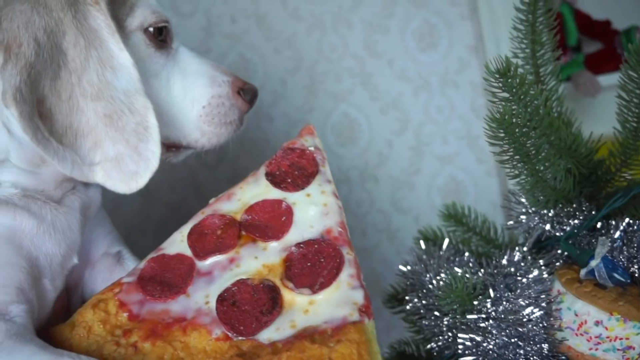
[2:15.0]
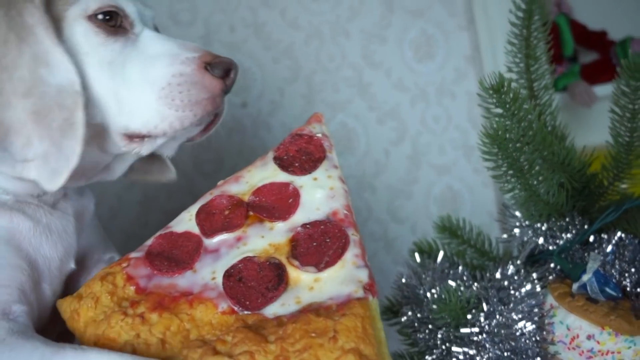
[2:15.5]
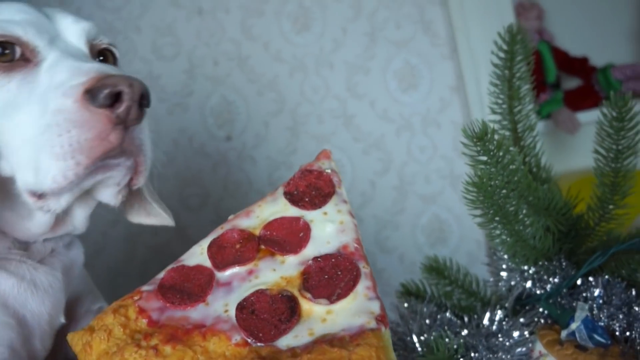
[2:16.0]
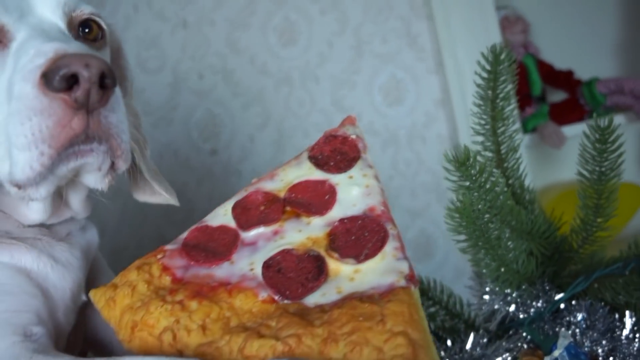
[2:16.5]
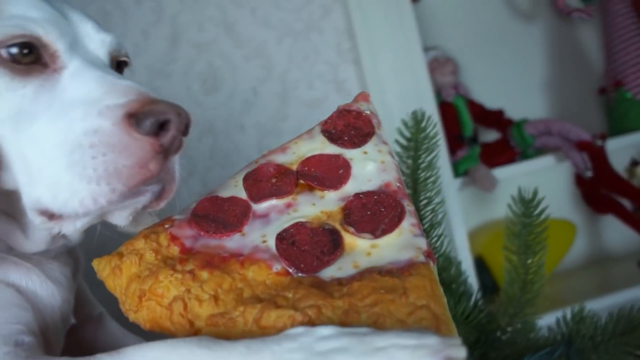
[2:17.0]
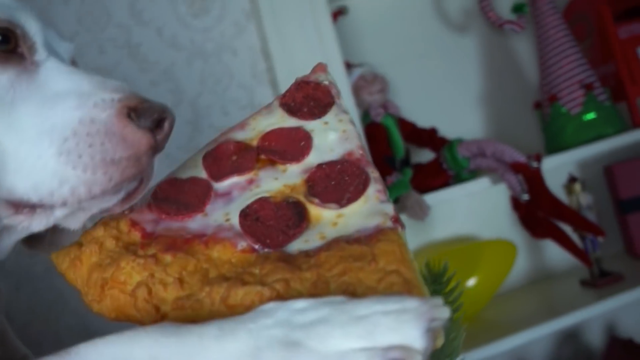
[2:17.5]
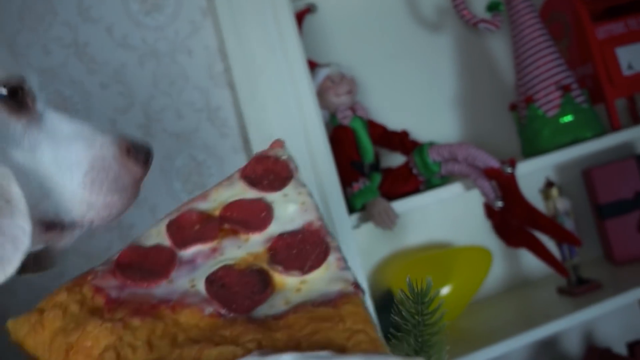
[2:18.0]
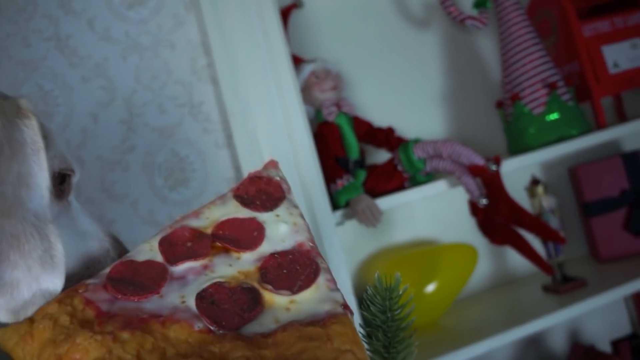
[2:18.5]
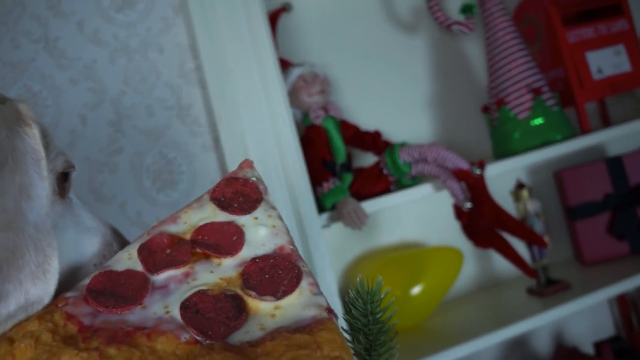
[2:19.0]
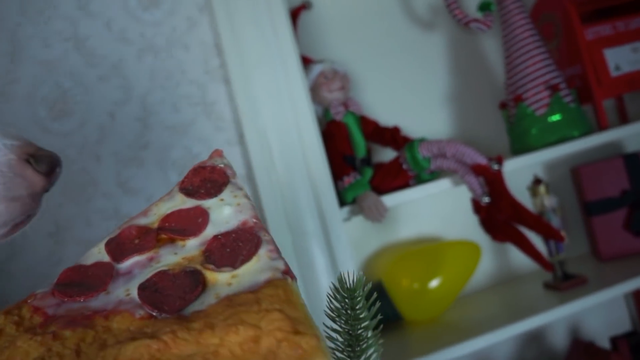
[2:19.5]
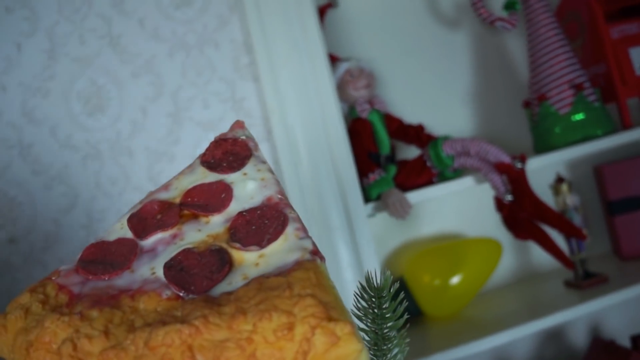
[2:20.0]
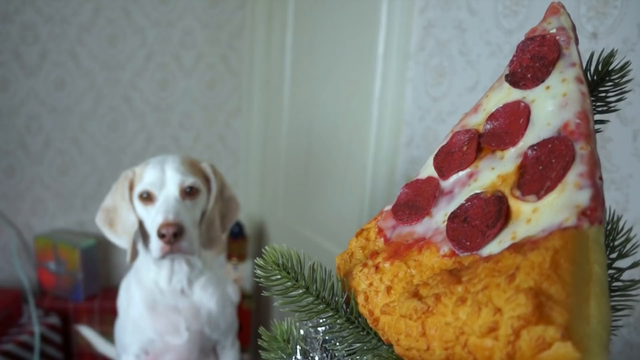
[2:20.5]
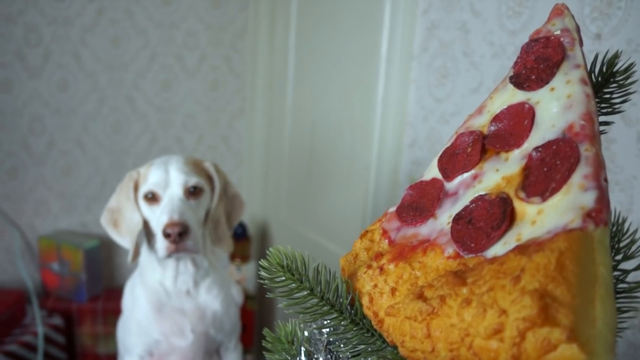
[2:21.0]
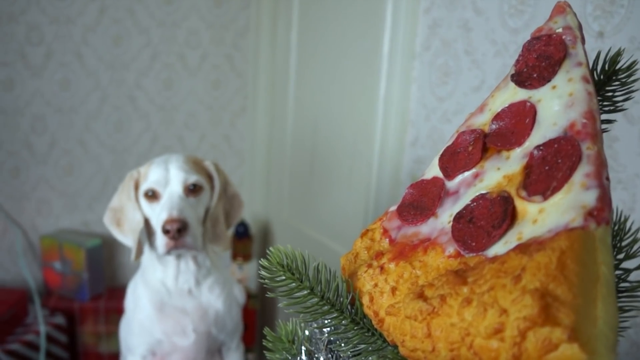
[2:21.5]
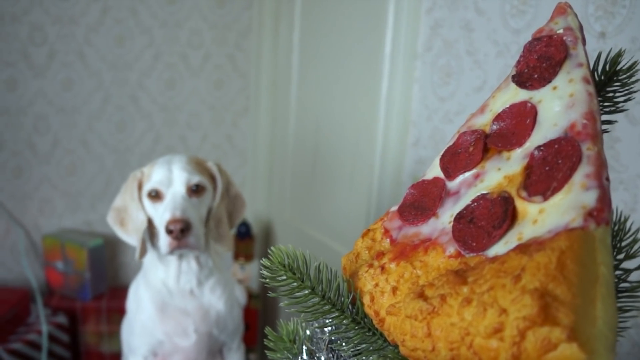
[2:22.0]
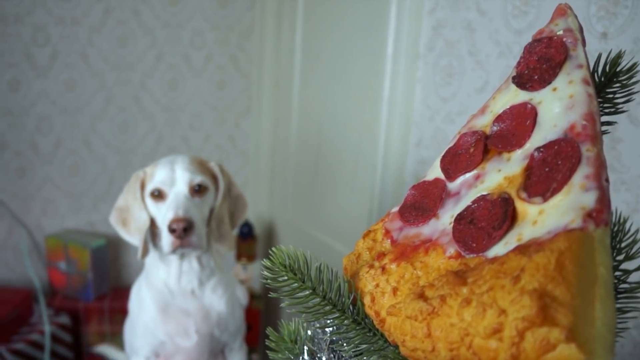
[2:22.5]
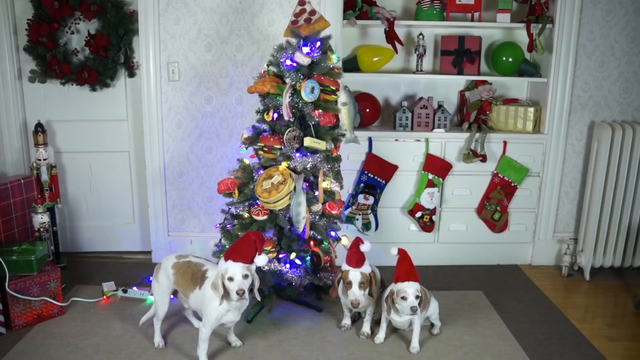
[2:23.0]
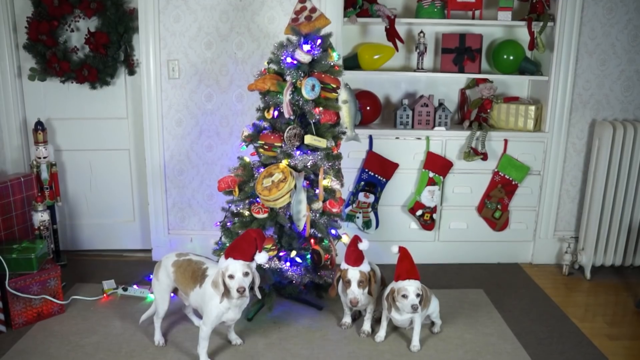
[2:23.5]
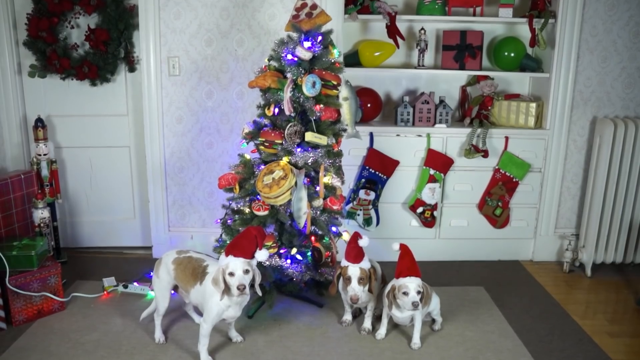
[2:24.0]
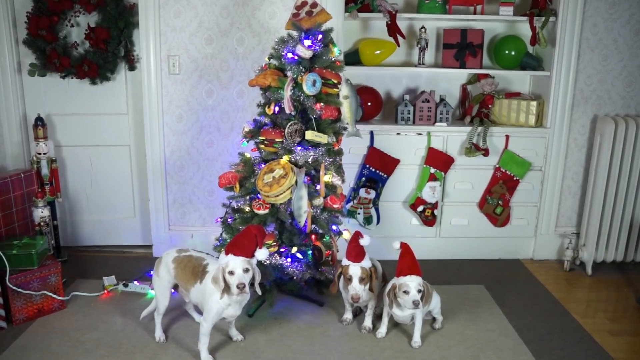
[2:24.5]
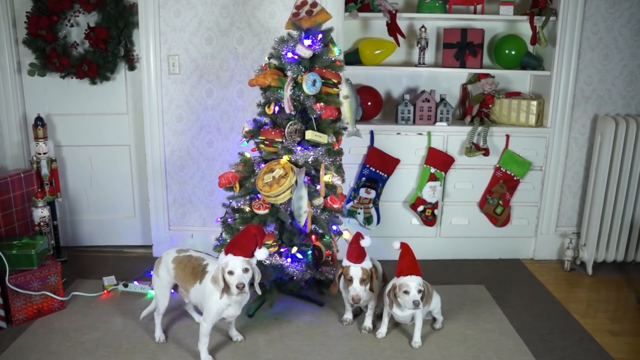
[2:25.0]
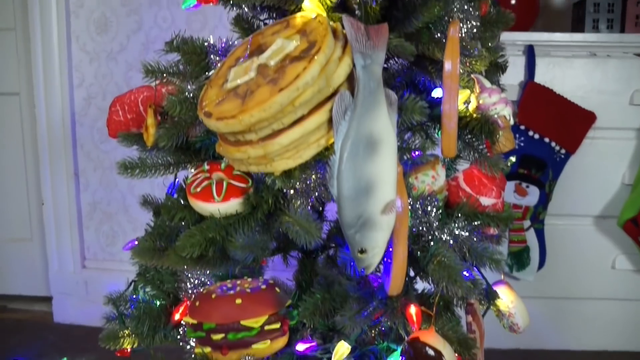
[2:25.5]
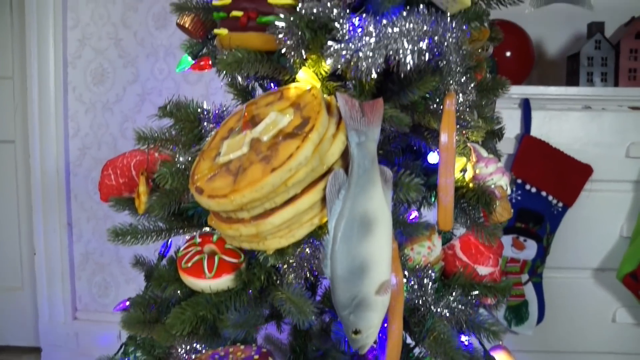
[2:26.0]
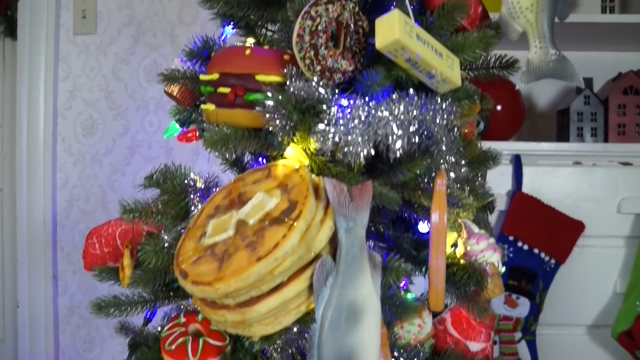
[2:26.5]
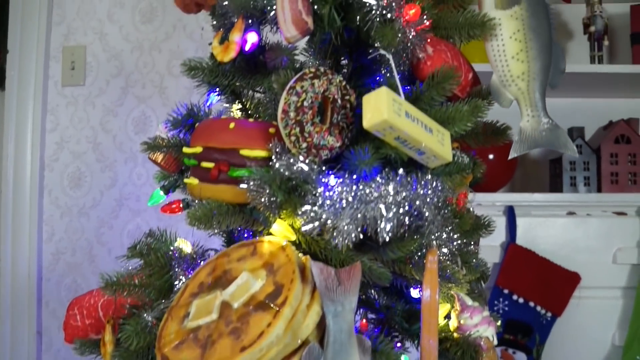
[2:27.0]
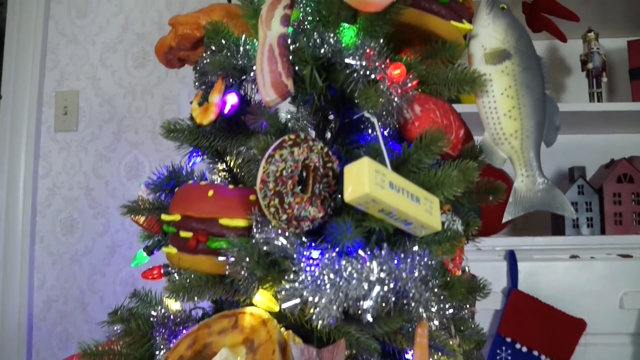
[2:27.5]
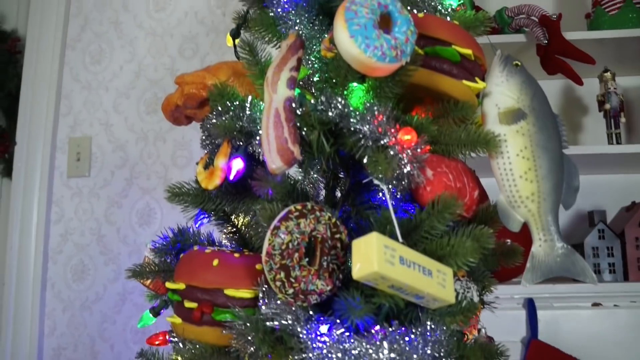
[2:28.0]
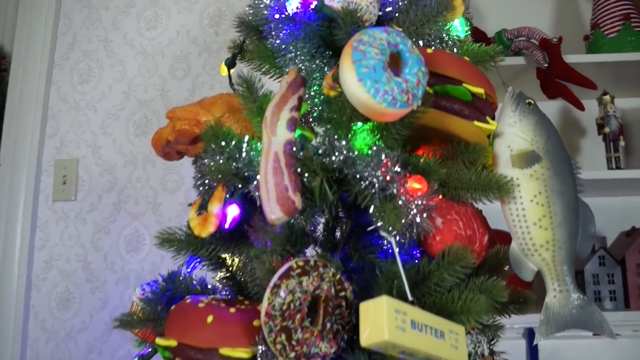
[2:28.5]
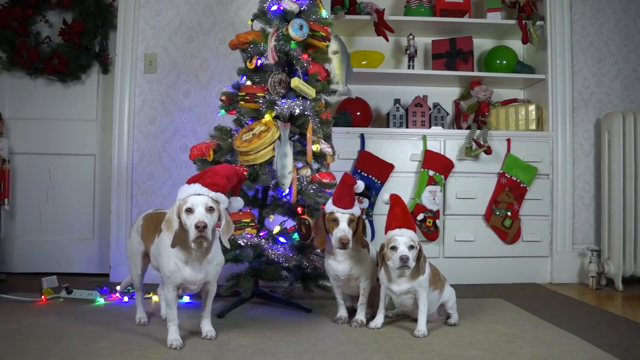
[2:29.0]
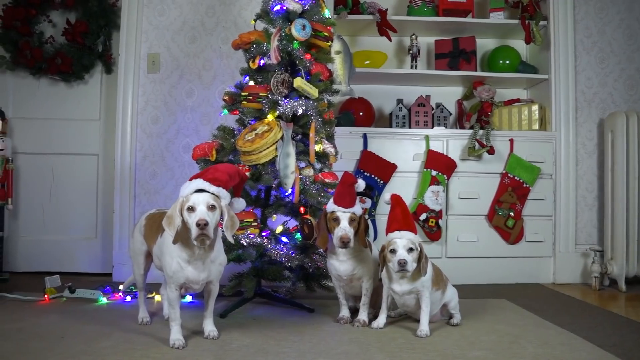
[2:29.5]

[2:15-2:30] The white dog puts a triangular slice of pepperoni pizza ornament at the top of the tree, completing a Christmas tree full of food ornaments: chocolate doughnuts, a blue doughnut with blue icing, a whole turkey, a fish, a stack of pancakes, a steak and a stick of butter. At the bottom of the tree, all three dogs sit together wearing red Christmas hats with a white ball at the end.